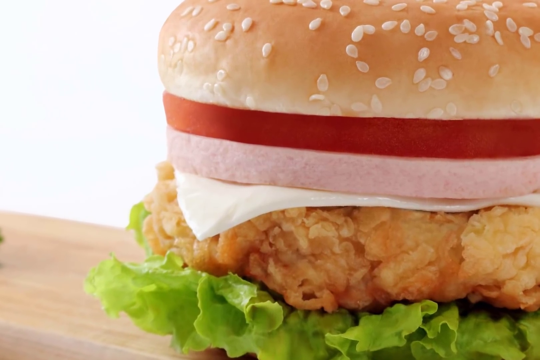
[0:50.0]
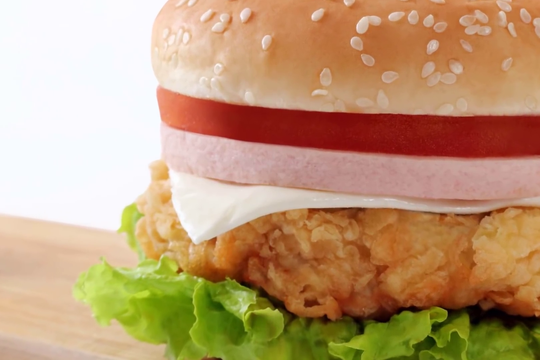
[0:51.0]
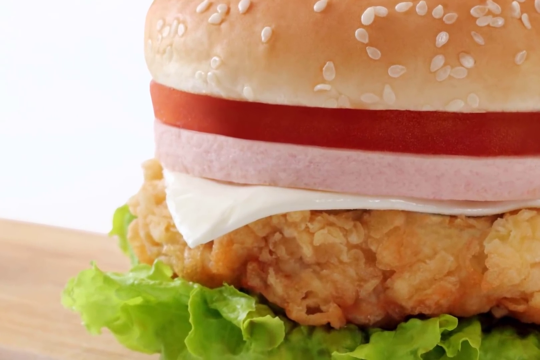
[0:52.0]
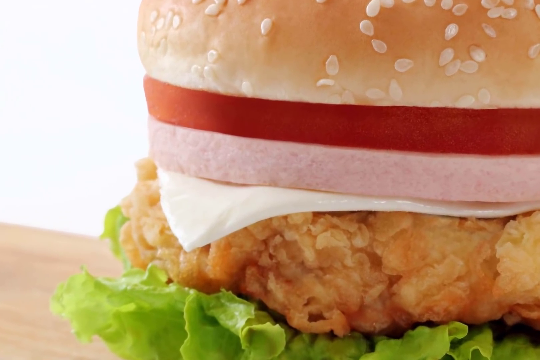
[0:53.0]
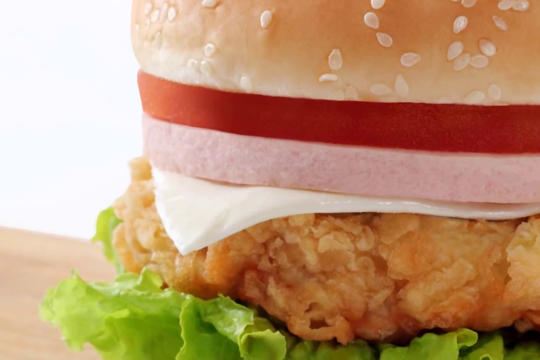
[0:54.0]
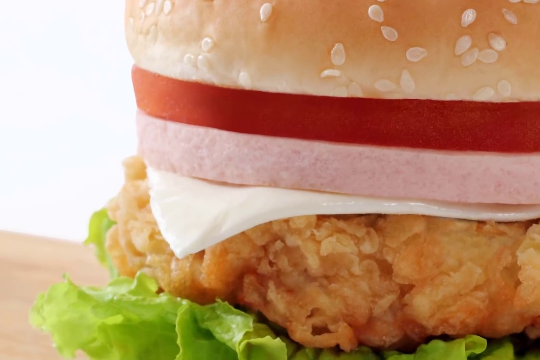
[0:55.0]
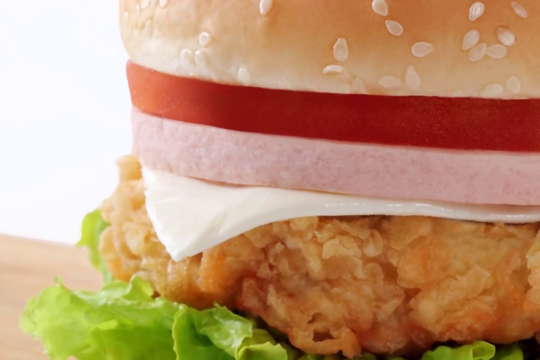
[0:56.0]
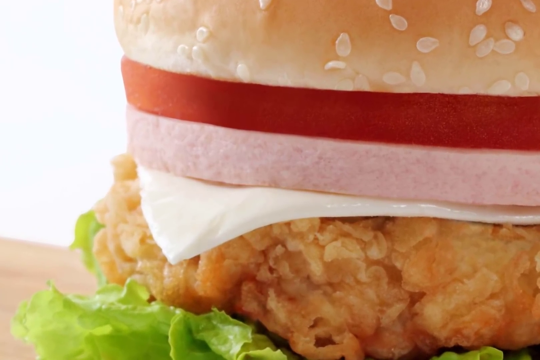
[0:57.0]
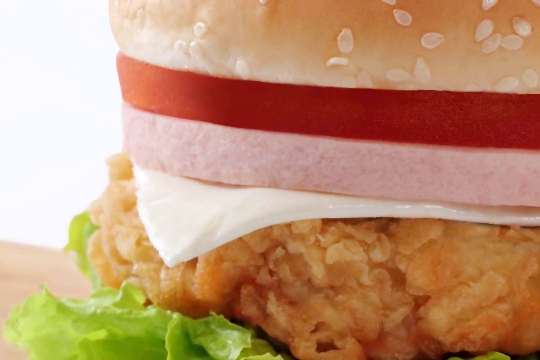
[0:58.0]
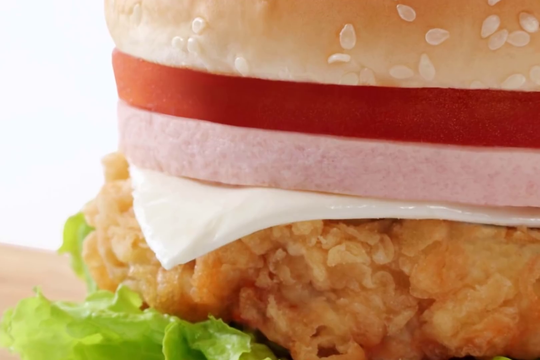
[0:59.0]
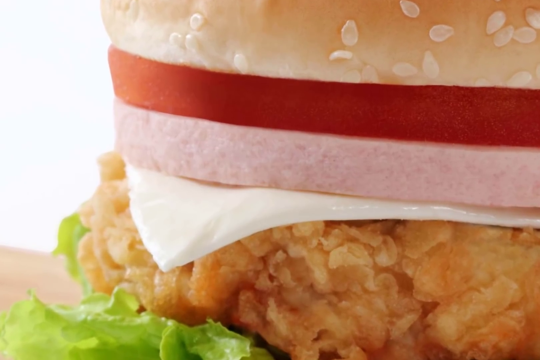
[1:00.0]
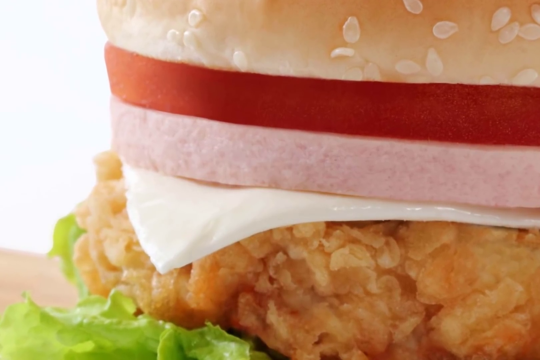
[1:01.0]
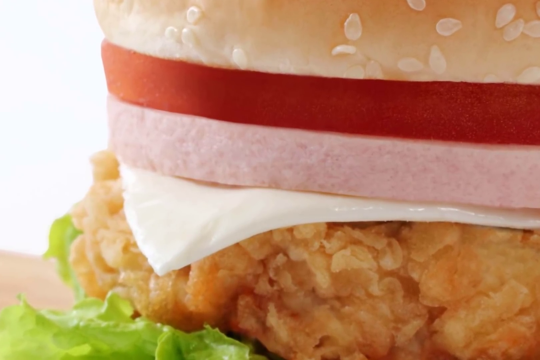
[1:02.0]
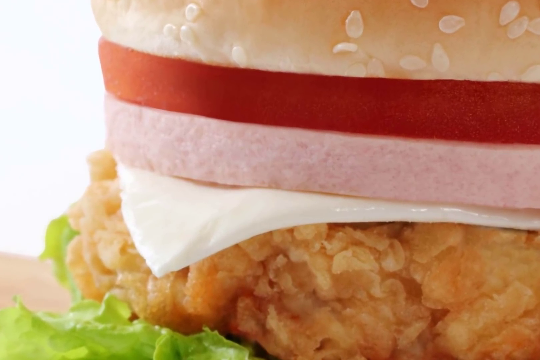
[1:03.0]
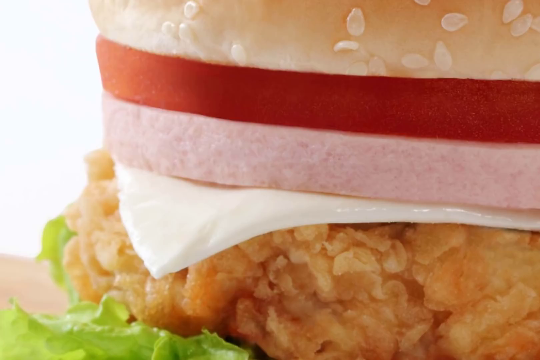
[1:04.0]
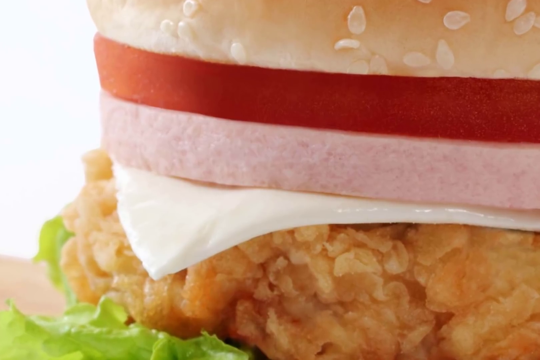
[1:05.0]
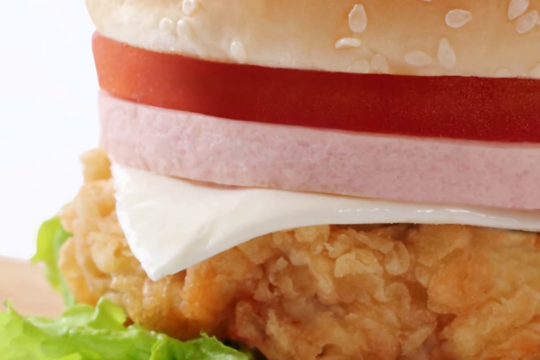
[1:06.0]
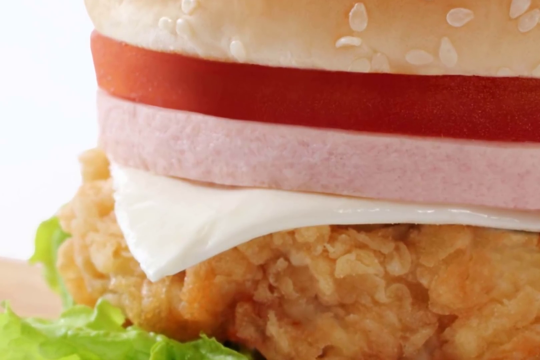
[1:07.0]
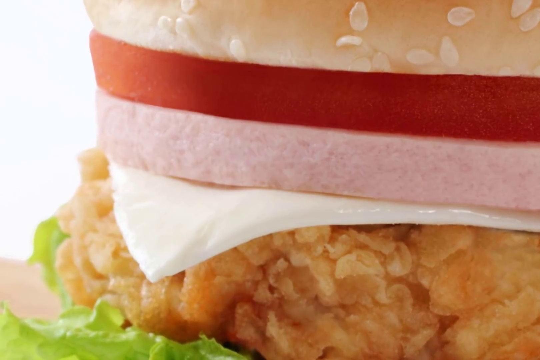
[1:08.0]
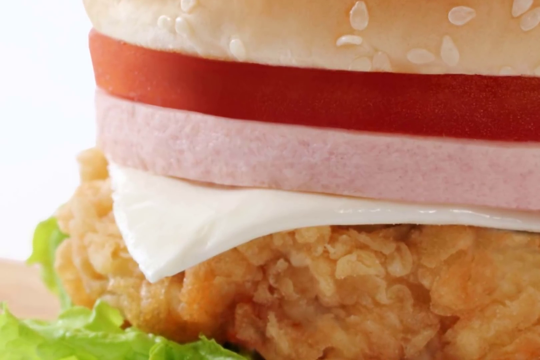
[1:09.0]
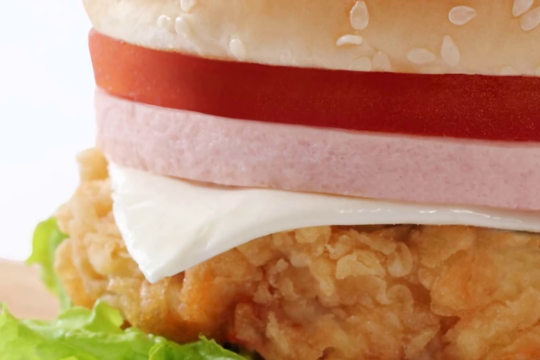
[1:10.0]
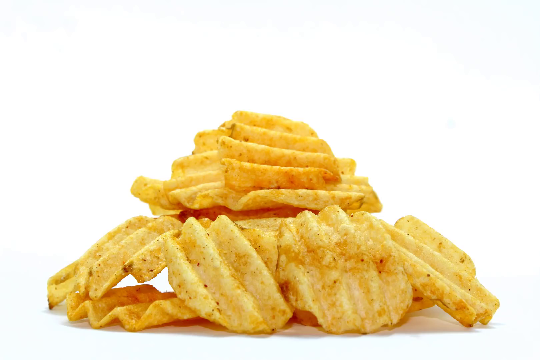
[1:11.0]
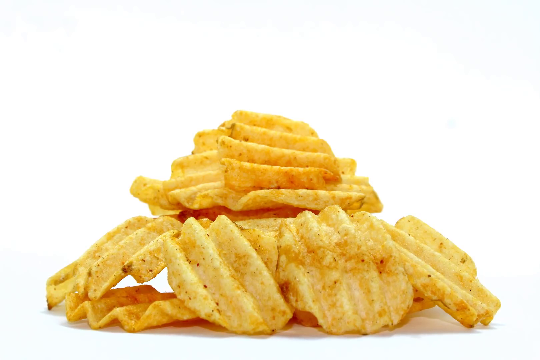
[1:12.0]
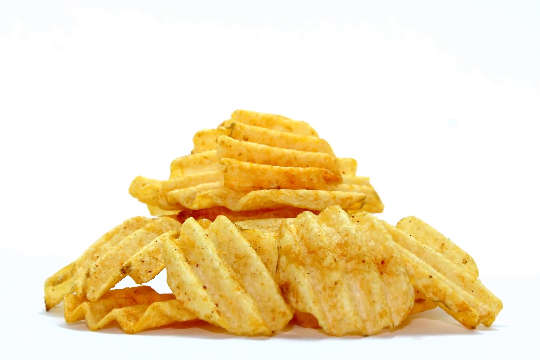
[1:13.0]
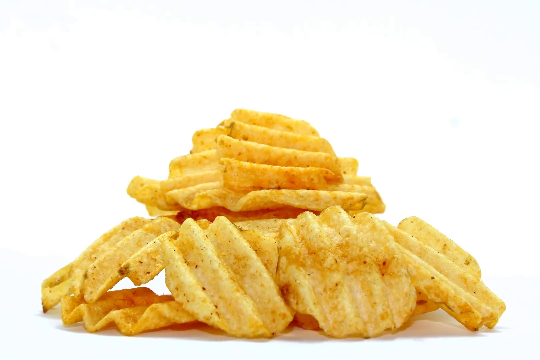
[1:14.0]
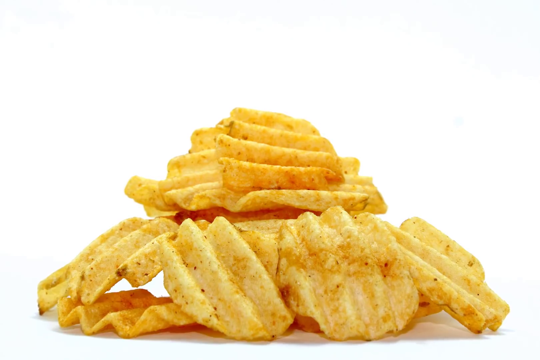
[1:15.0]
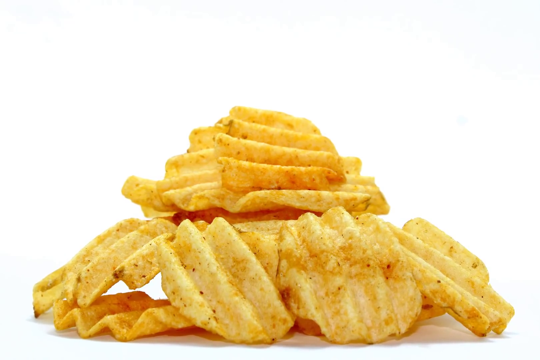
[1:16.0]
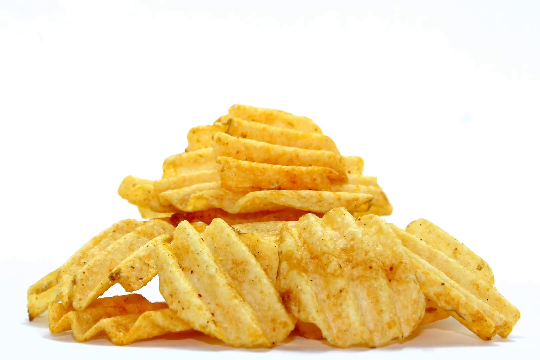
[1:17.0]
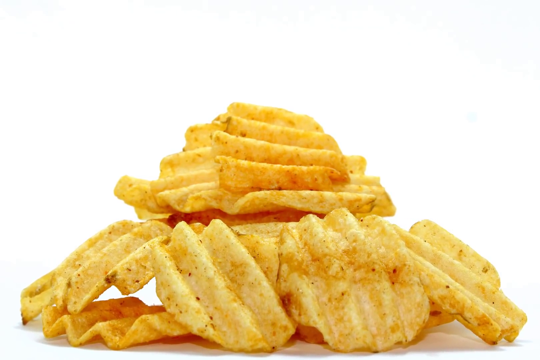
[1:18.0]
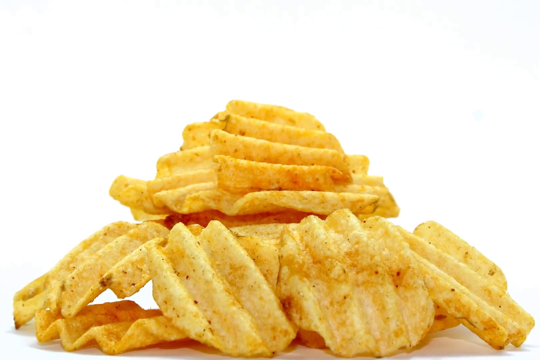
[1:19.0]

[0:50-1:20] A bagel with tomato, ham, cheese, mozzarella and chicken on a freshly baked roll is shown, and it looks juicy. Chips with a little spice and salt on them are also shown.